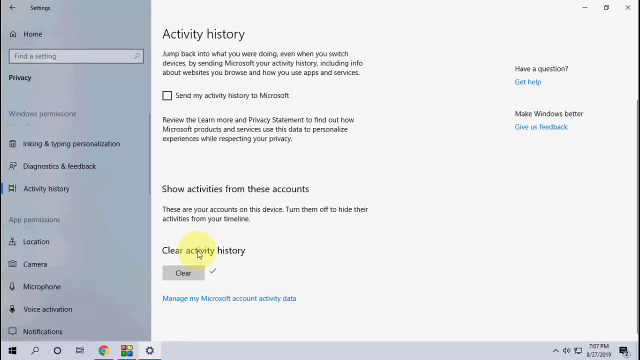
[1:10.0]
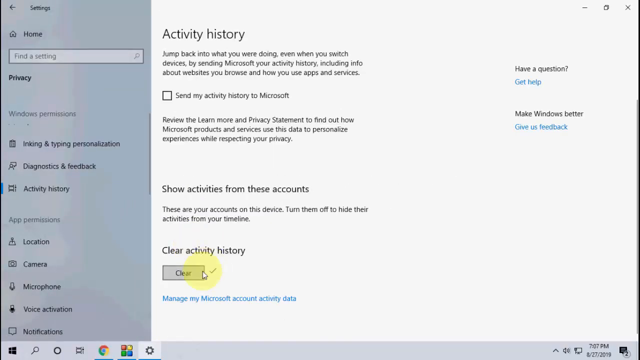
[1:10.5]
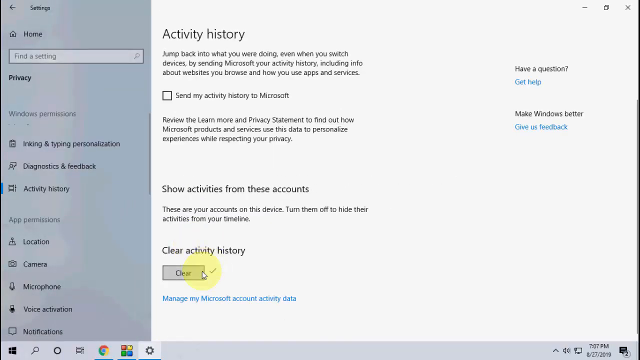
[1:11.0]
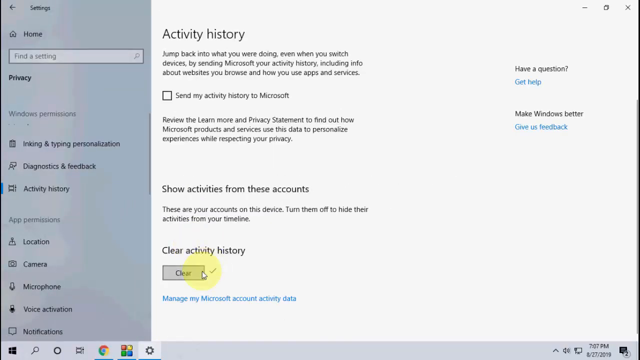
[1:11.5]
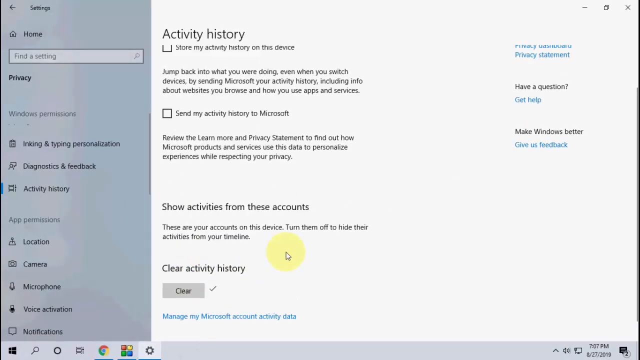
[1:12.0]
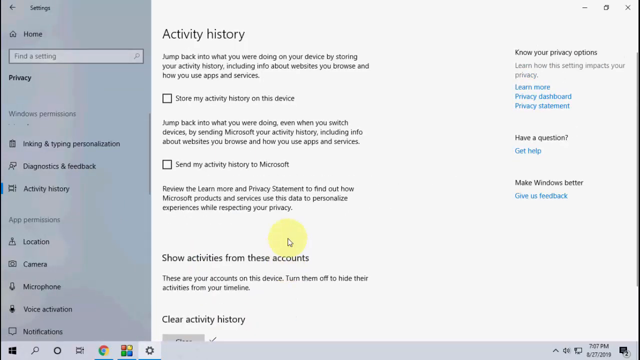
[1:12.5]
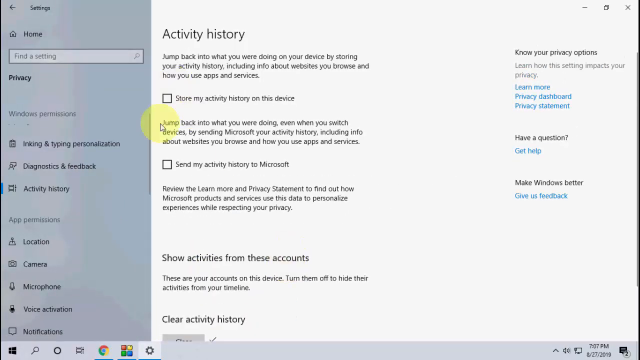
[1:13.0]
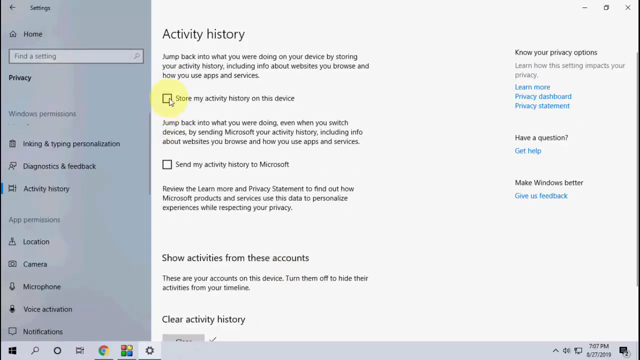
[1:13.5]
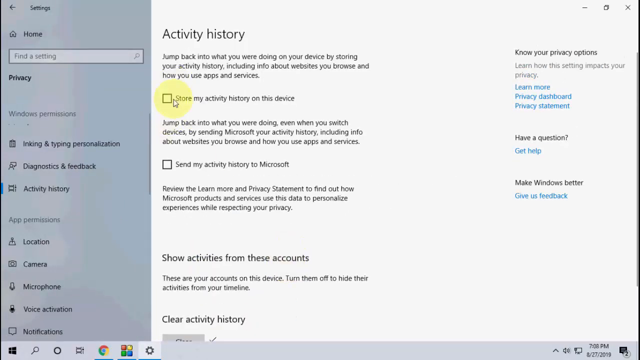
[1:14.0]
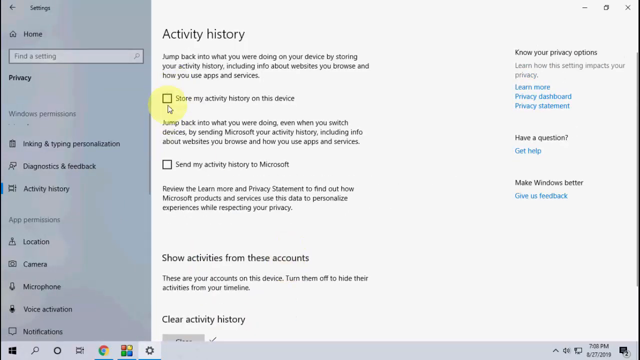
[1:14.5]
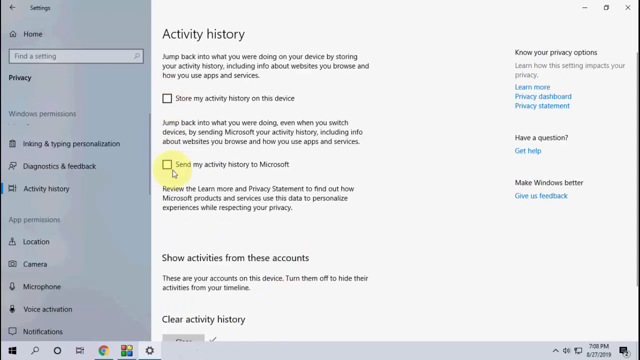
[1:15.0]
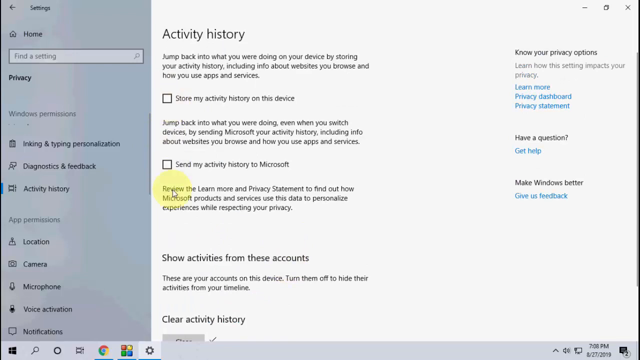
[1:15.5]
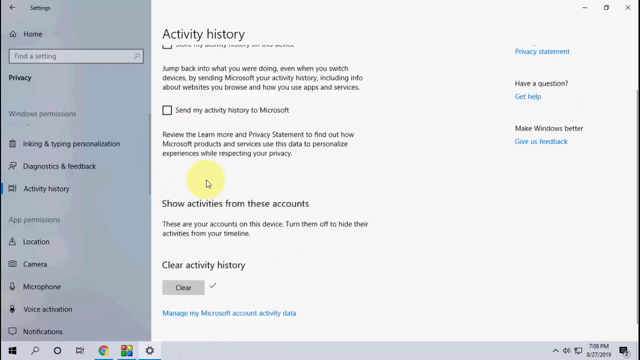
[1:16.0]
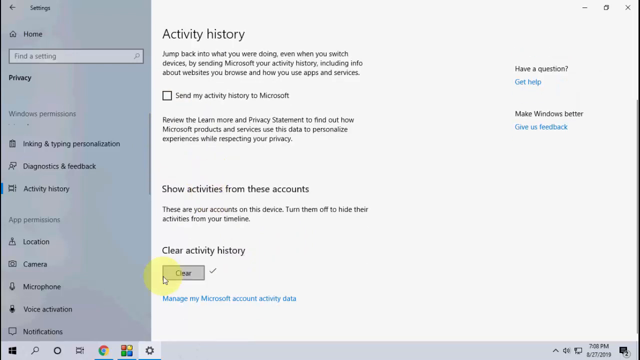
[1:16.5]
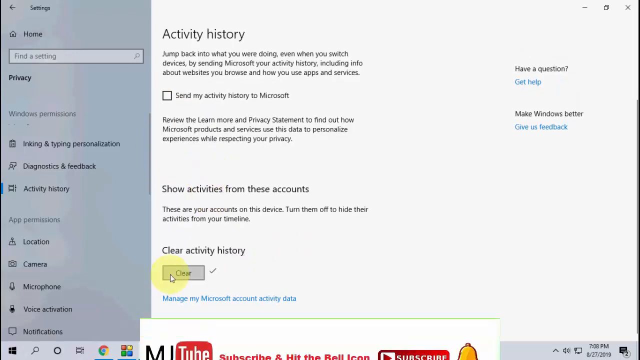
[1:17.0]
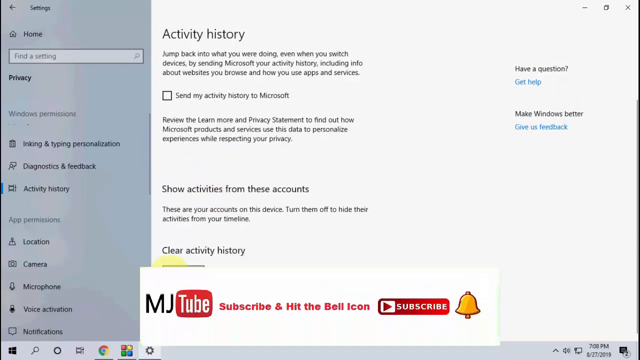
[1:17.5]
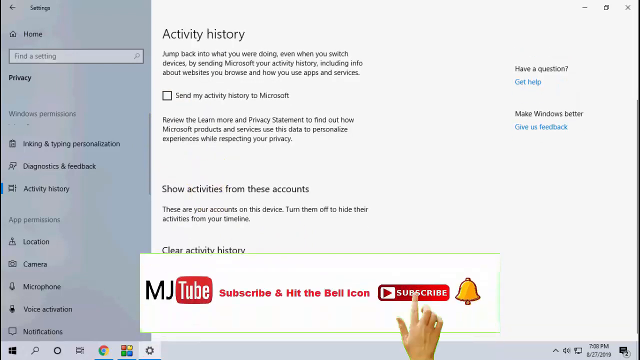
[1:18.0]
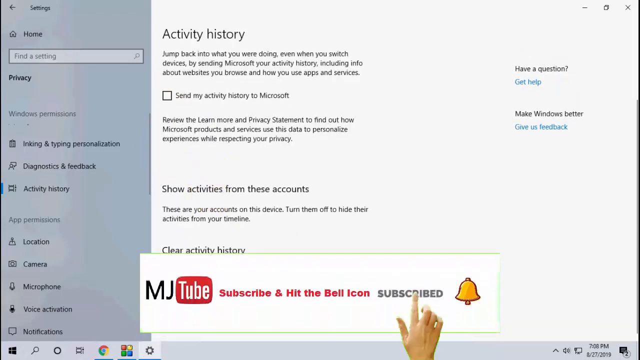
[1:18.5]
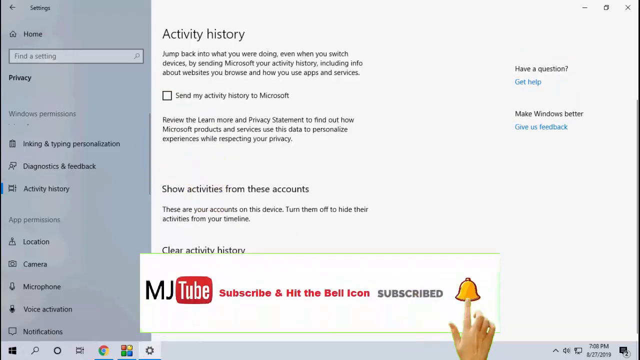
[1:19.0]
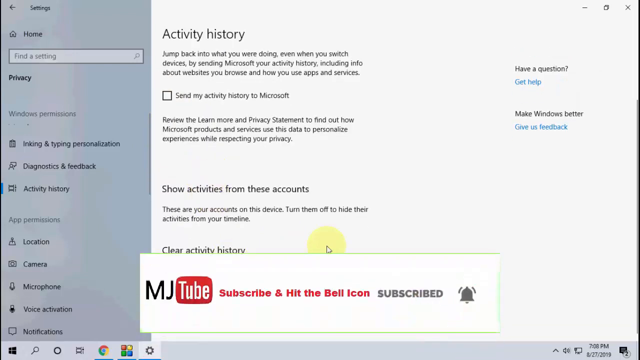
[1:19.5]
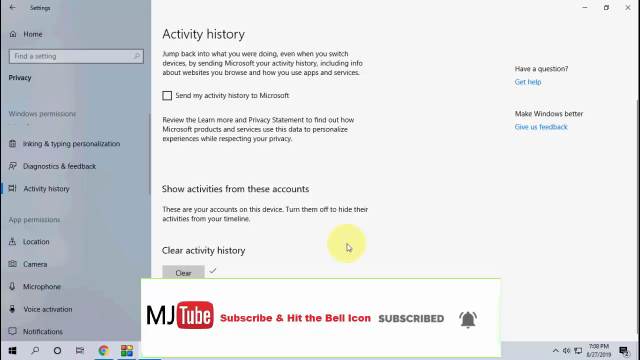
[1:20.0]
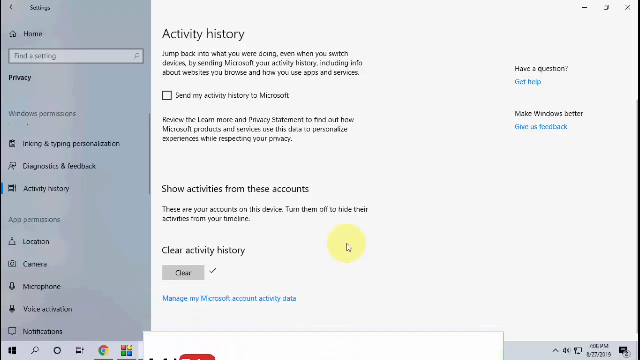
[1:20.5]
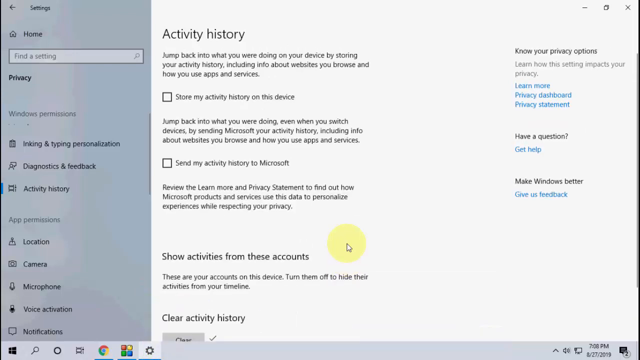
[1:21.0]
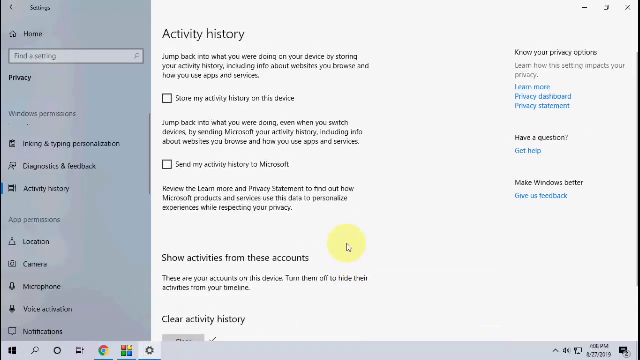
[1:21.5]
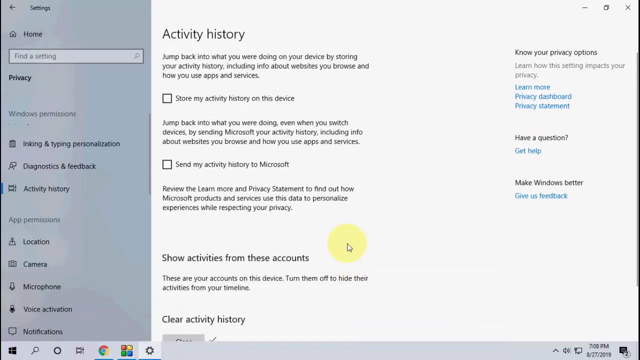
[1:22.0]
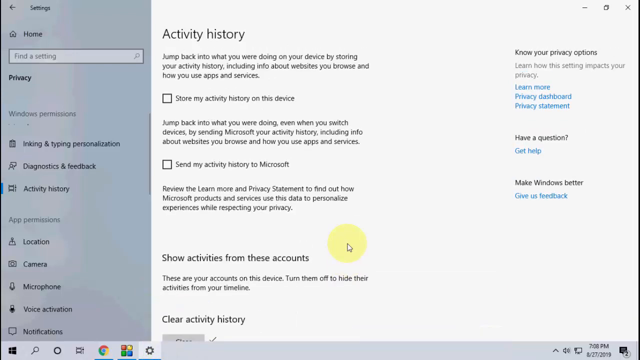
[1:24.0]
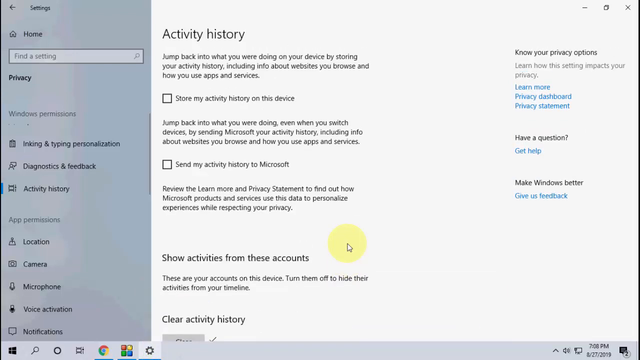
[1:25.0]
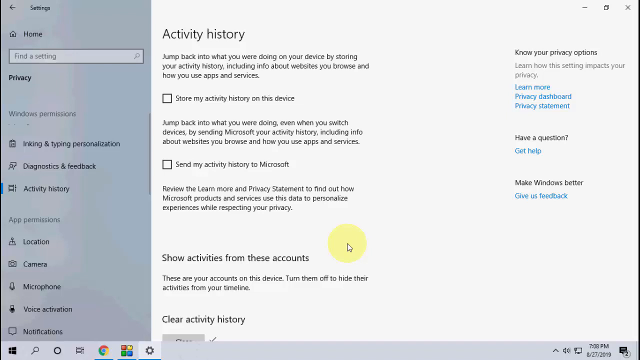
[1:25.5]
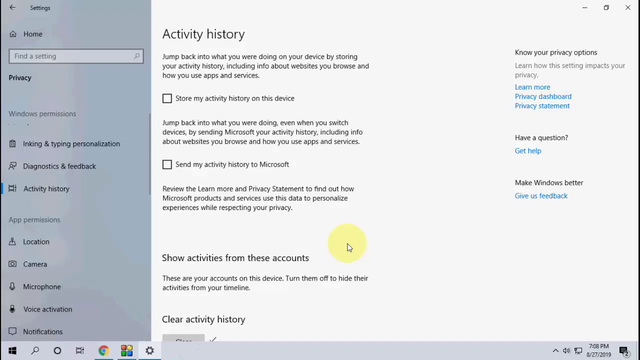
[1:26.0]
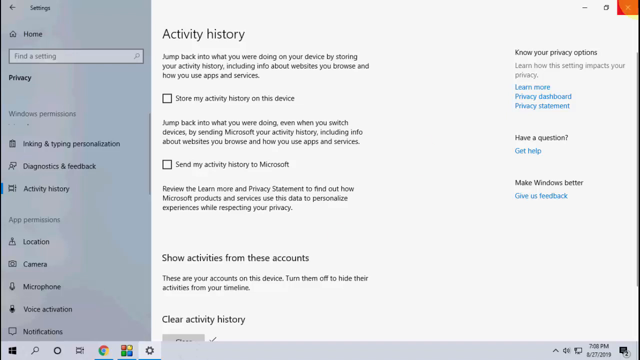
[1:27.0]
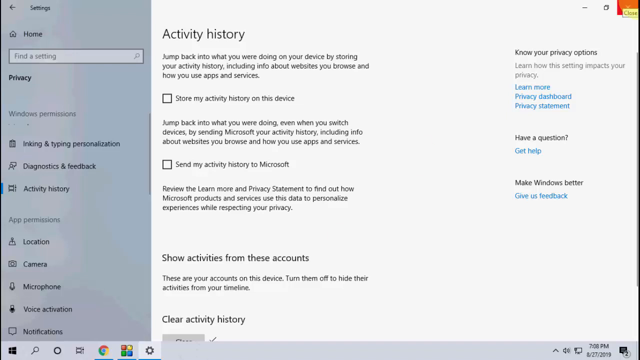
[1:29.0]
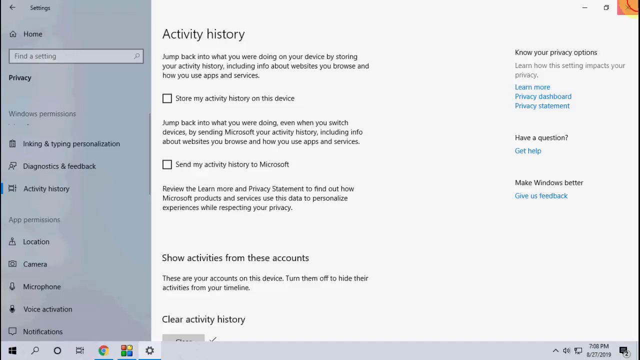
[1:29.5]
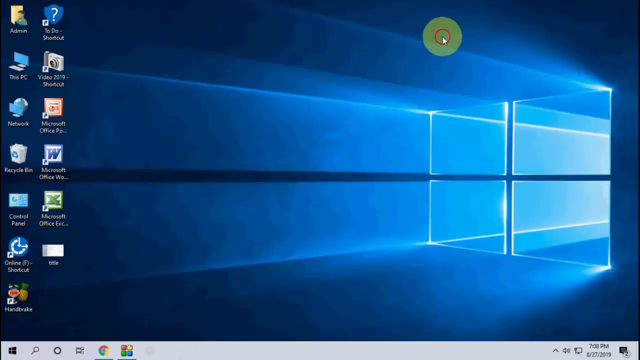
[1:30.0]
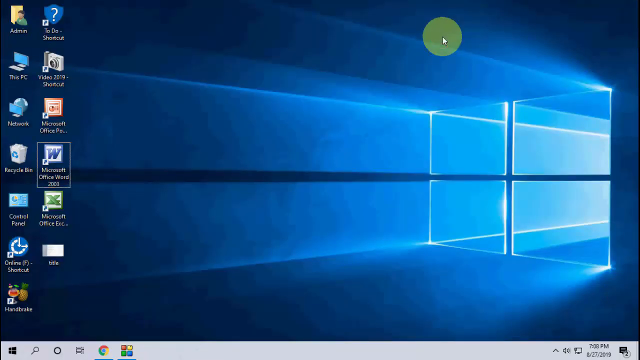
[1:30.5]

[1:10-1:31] A computer screen shows the settings section of a computer. On the left-hand side is a bar with a grey background: "Settings" is at the top, below it an image of a little house next to the word "Home", then a search bar, and then "Privacy". This area has two sections, "Windows permissions" with three options and "App permissions" with five options. The rest of the screen has a white background and is titled "Activity history". There is an unchecked box with the words "Send my activity history to Microsoft" next to it, and below that are two more sections, one saying "Show activities from these accounts" and another saying "Clear activity history", with a clear box below it. A cursor with a yellow highlight around it hovers over the line "Clear activity history". The cursor moves down and hovers over the Clear button, then moves up, and as it does the whole page shifts downward, revealing more of the page. A second unchecked box appears with the text "Show my activity history on this device" next to it. The cursor goes to that line and hovers over the box, moves back up and down three times, goes down to "Show activities from these accounts", and then all the way down to where the Clear box was, hovering over it briefly. A pop-up comes up at the bottom of the screen with a single line: "MJ" in black letters, next to it a YouTube logo that just says "Tube", then in red "Subscribe and hit the bell icon", then a YouTube Subscribe button with the play symbol, over which a hand with the pointer finger extended is hovering, and next to that a yellow bell. The finger clicks the Subscribe button, which becomes black letters, then moves to the bell and clicks it, and the bell becomes smaller and black. The pop-up sinks down to the bottom of the screen and disappears, and the cursor is visible again as the page scrolls upward. The cursor hovers for a few seconds next to "Show activities from these accounts", then moves up to the top right-hand corner and clicks the X, which flashes red. The page disappears, revealing a Windows home screen whose background is a Windows logo with light rays shining through it. The cursor, still with its yellow highlight, hovers above the window on the right-hand side of the screen. On the left-hand side are two lines of icons, seven in the first and six in the second.